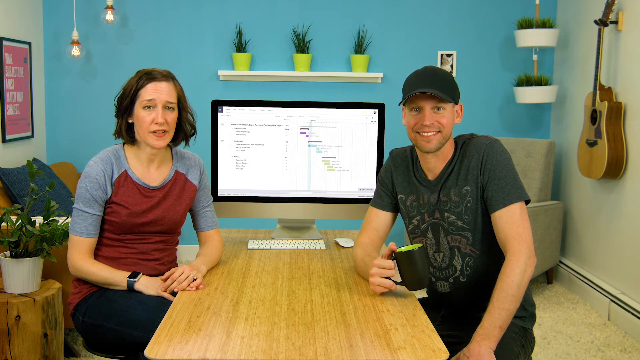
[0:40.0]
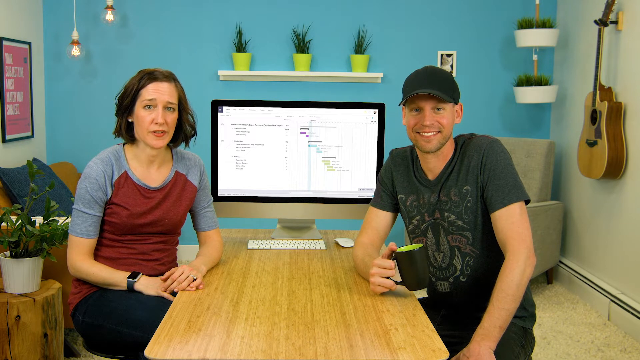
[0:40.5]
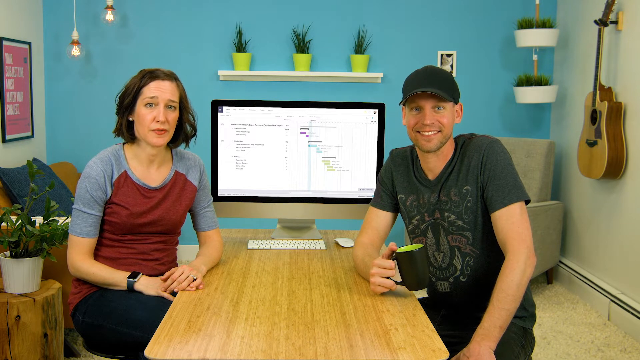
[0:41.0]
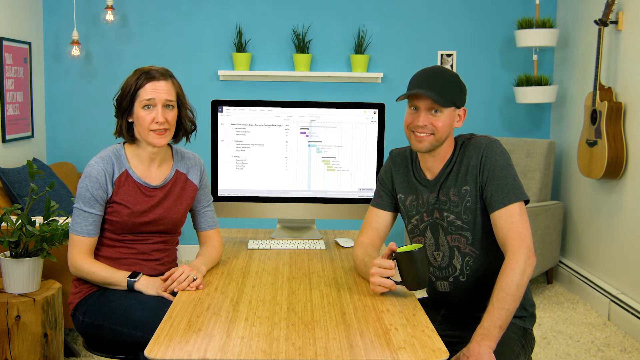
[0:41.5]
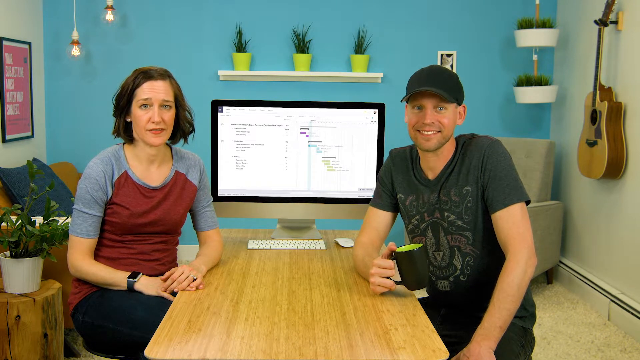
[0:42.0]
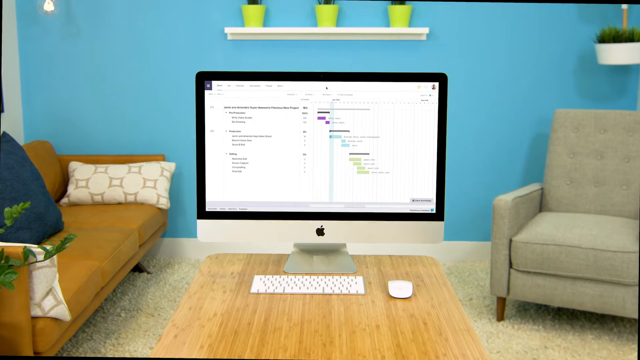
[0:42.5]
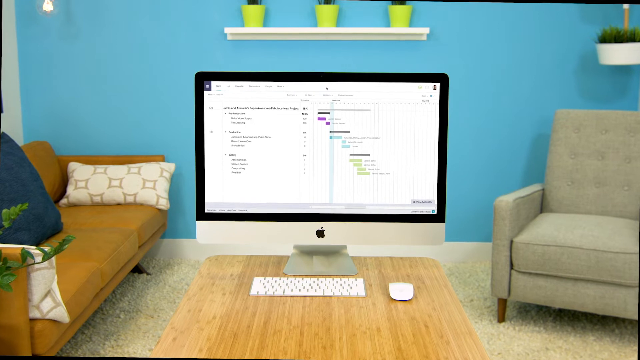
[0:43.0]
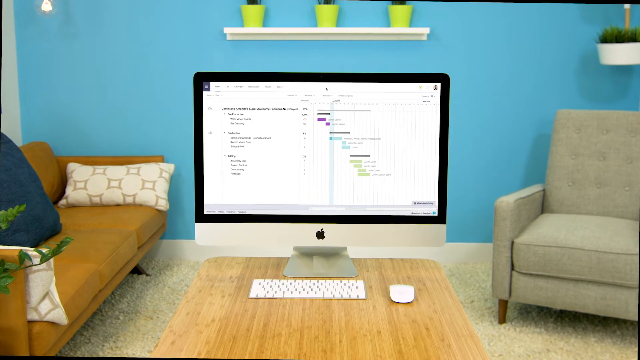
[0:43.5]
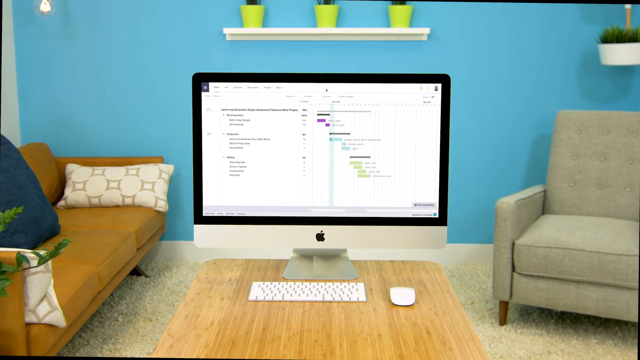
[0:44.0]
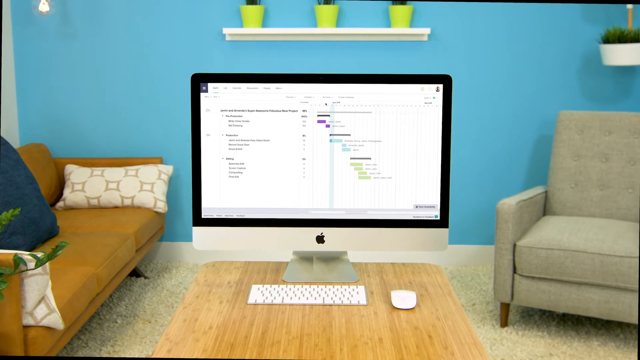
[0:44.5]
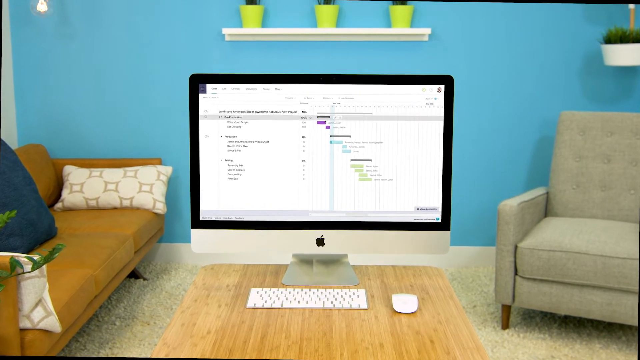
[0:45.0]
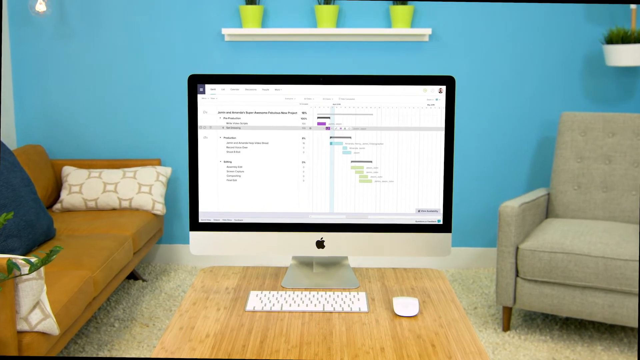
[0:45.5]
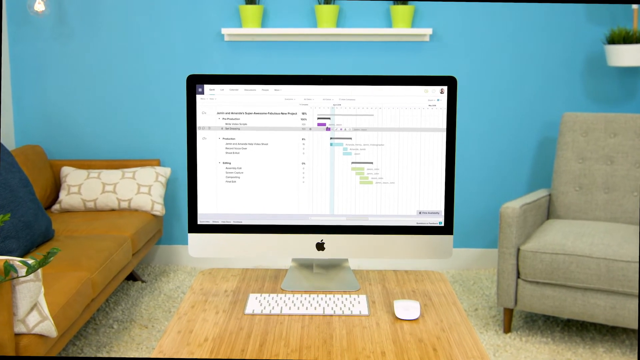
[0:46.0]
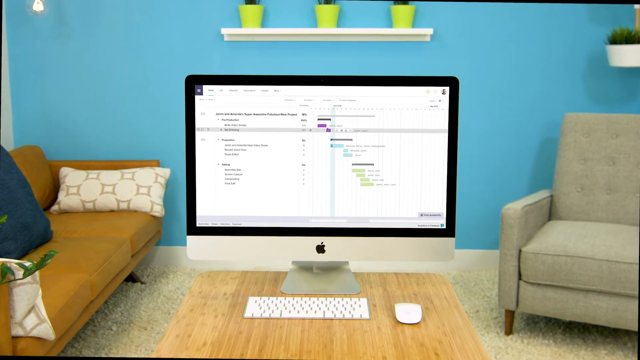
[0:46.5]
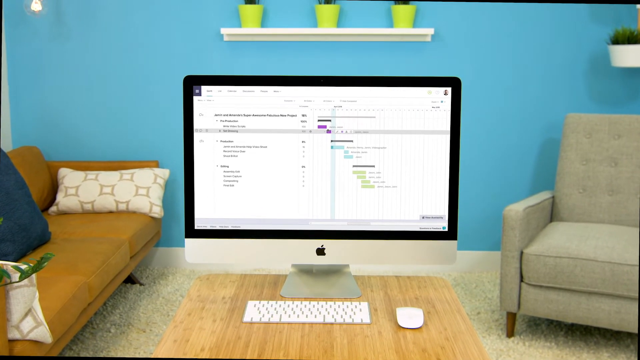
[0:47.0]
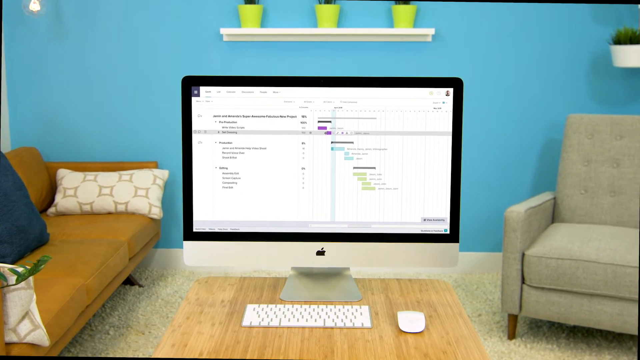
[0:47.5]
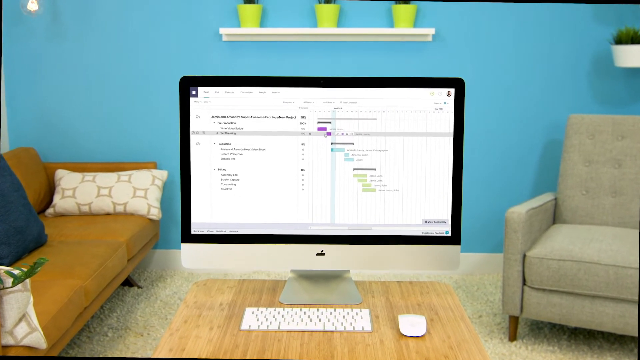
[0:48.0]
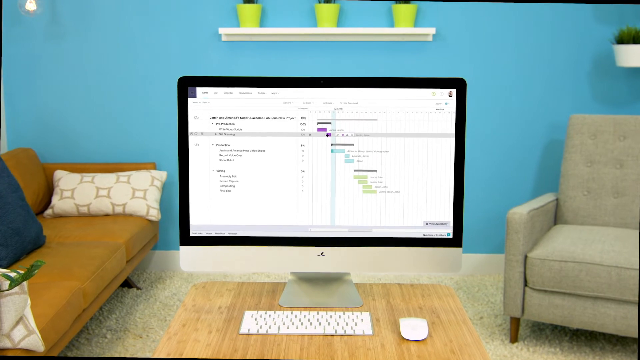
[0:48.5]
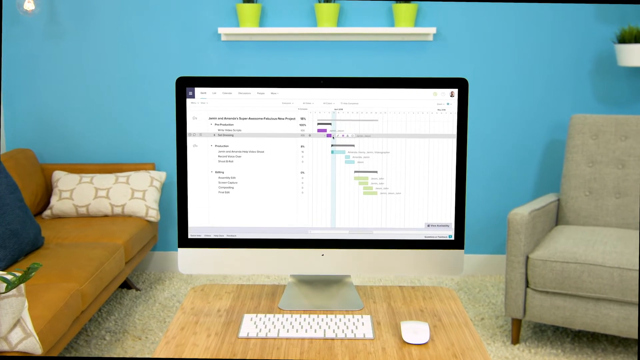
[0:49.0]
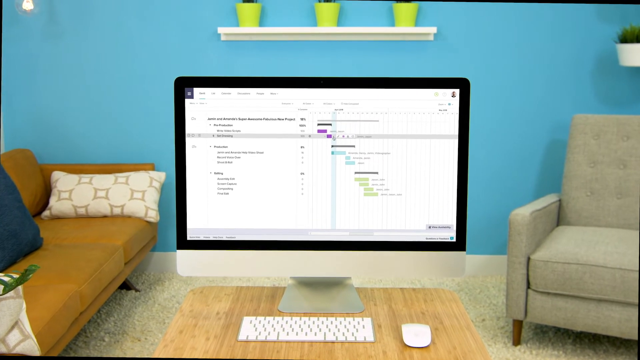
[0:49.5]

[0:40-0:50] Two people are shown: a woman with short brown hair in a gray and red t-shirt and blue jeans, and a man in a black hat and a black graphic t-shirt holding a black coffee cup. Between them is a computer screen with a keyboard and mouse on a table. In the background are a blue wall with some plants on a white shelf, a brown chair at the left side of the frame, a gray chair on the right side, a guitar hanging on a wall, some plants on the left, and plants at the upper right corner. The man looks at the camera and smiles while the woman talks to the camera, and he shakes his head. The camera then moves in very slowly to the computer, where a mouse pointer on the screen scrolls down, sort of hovering over some of the text. The view then zooms into some of the contents on the page.